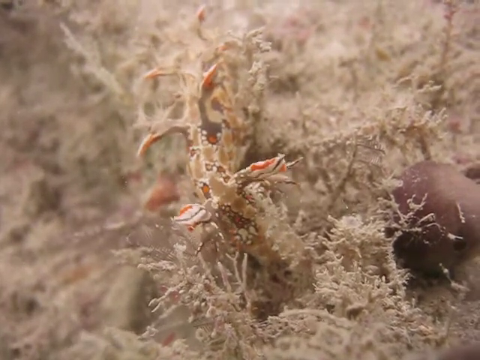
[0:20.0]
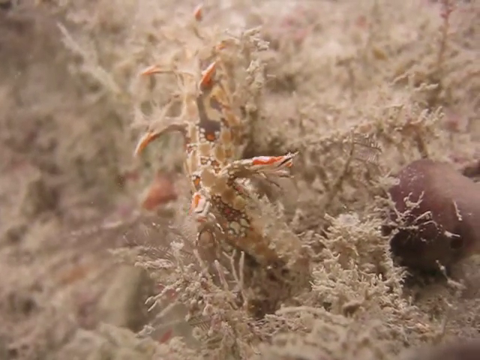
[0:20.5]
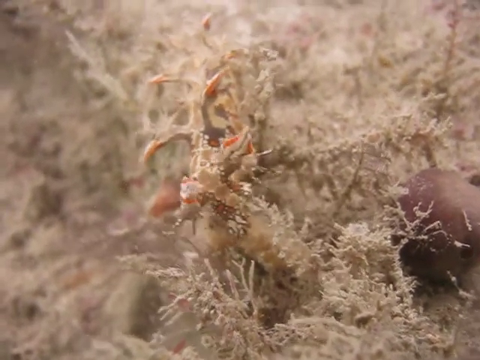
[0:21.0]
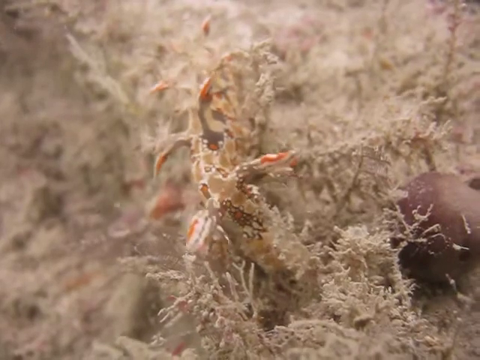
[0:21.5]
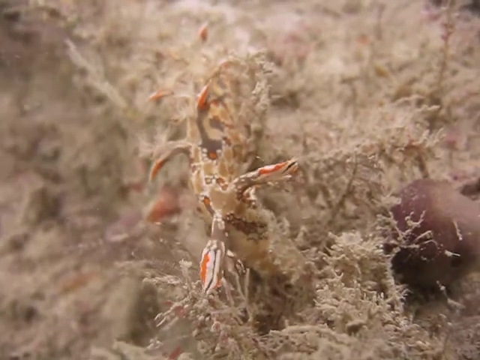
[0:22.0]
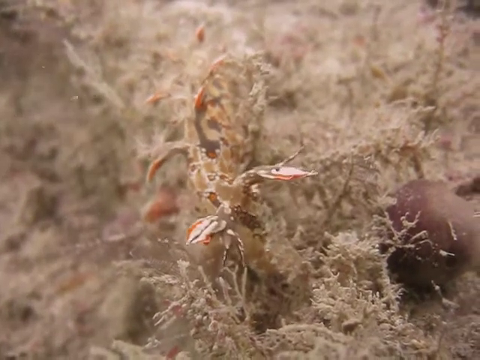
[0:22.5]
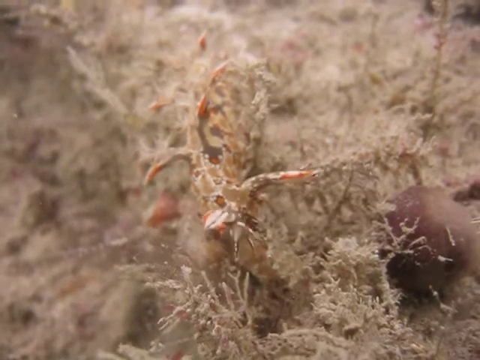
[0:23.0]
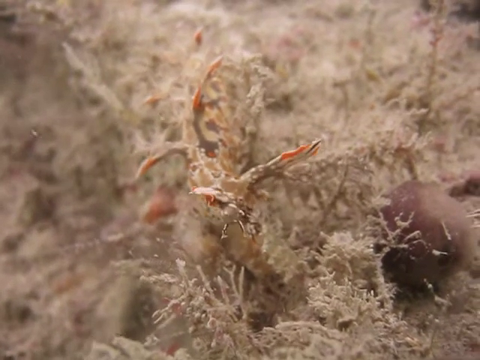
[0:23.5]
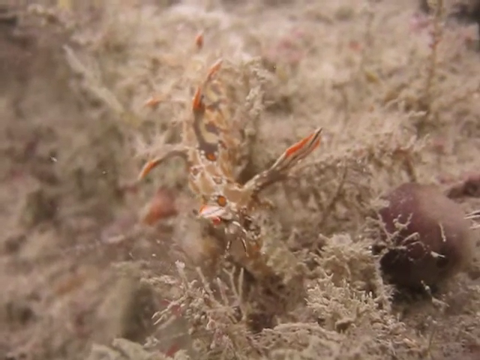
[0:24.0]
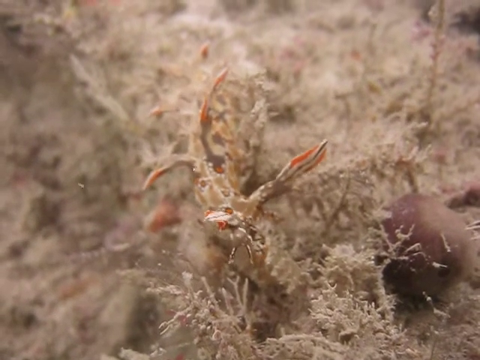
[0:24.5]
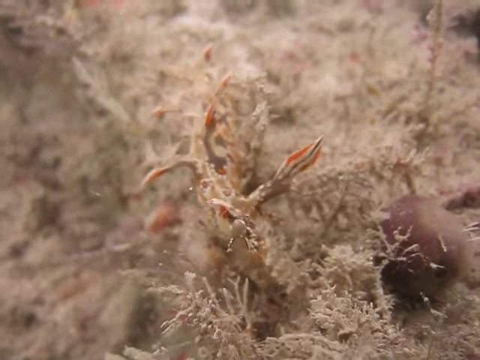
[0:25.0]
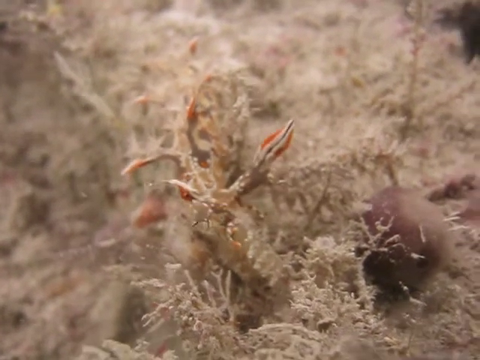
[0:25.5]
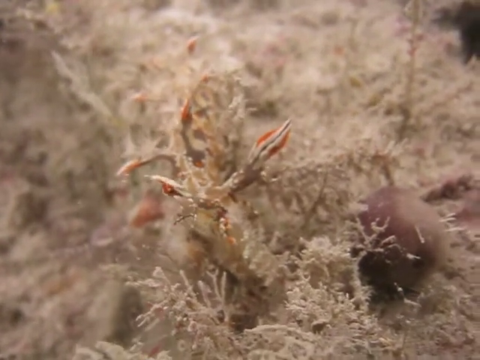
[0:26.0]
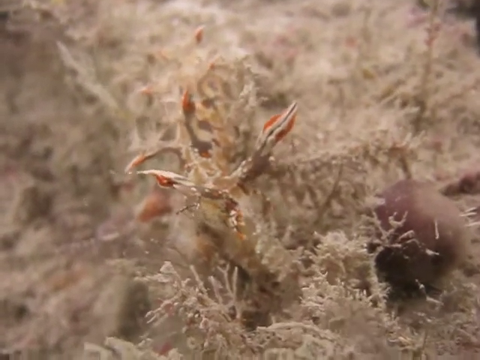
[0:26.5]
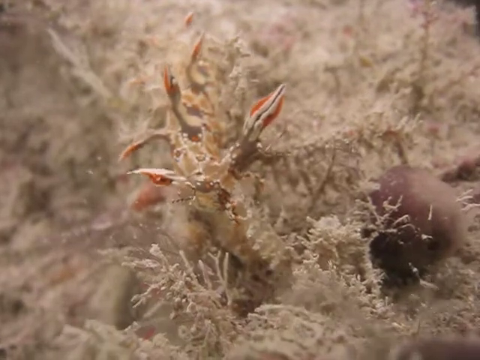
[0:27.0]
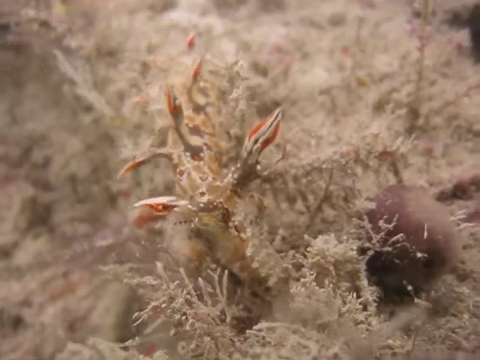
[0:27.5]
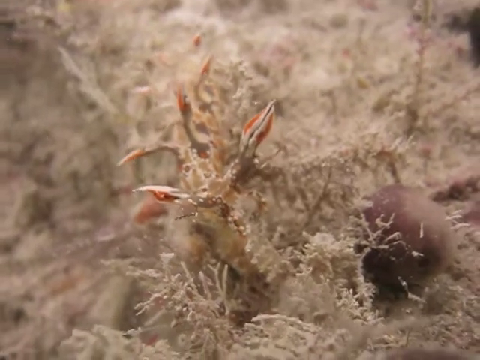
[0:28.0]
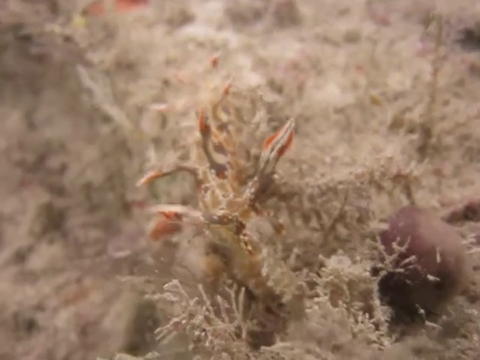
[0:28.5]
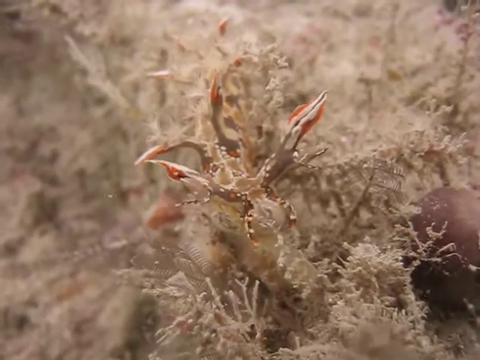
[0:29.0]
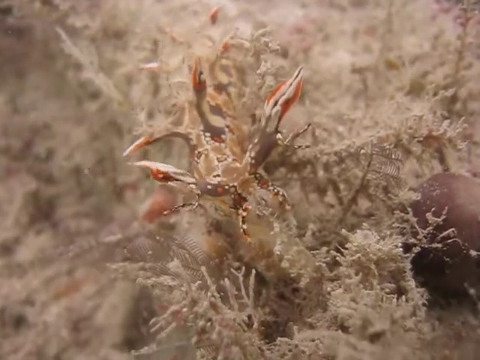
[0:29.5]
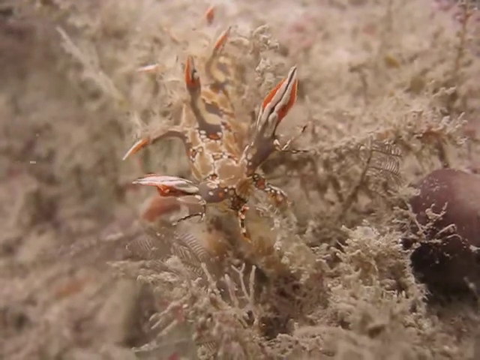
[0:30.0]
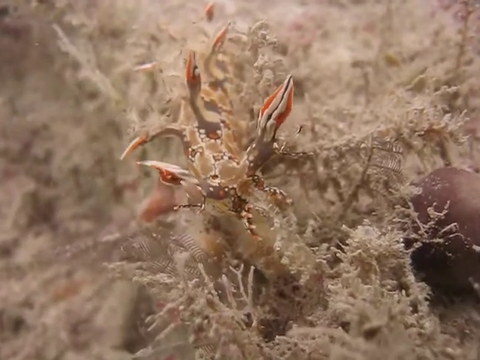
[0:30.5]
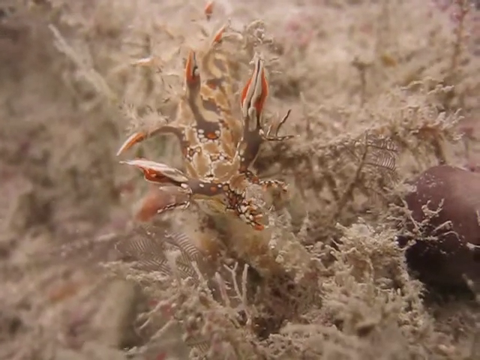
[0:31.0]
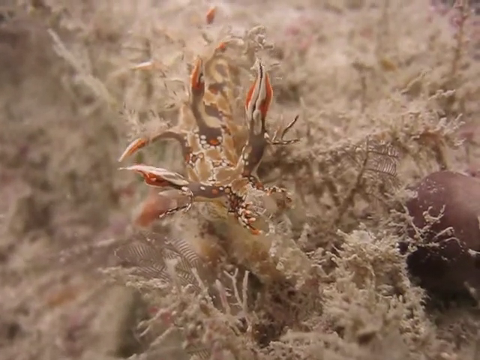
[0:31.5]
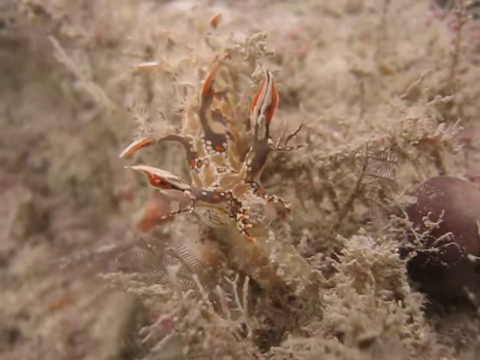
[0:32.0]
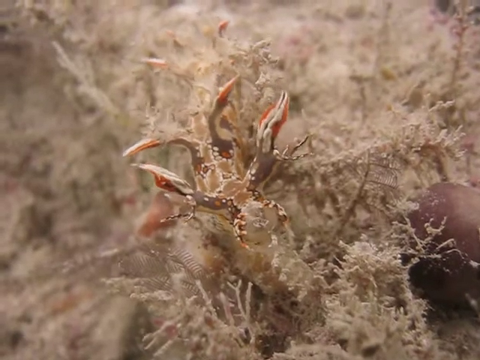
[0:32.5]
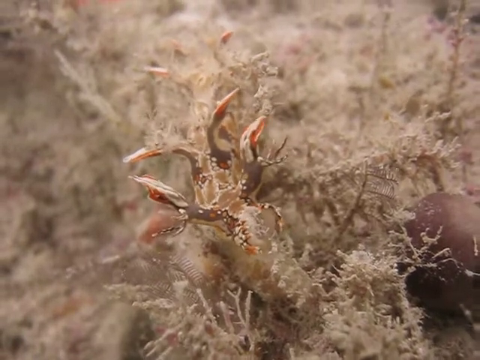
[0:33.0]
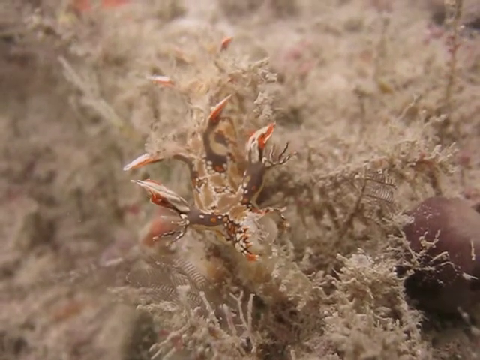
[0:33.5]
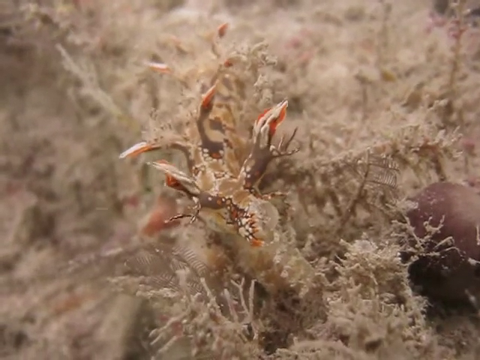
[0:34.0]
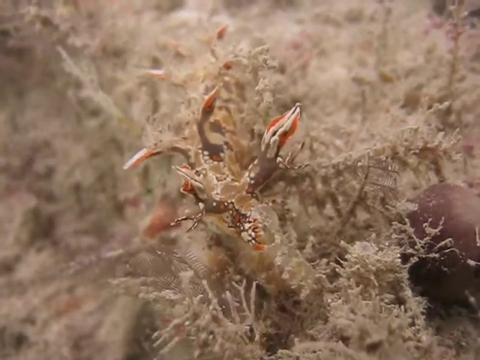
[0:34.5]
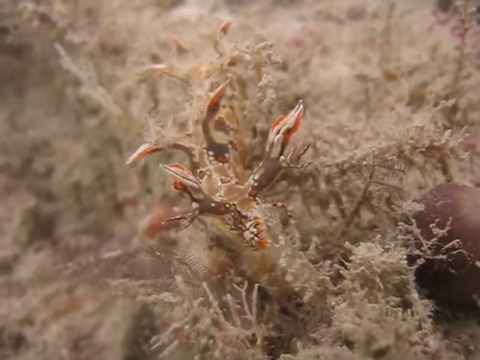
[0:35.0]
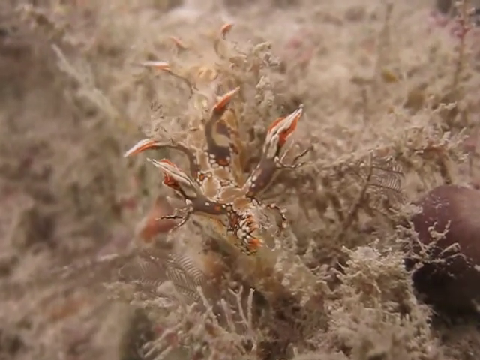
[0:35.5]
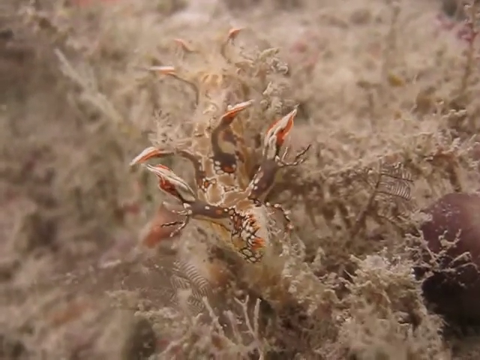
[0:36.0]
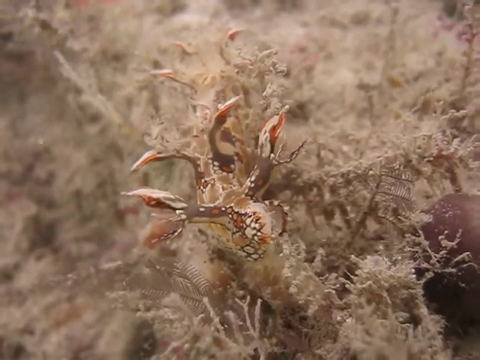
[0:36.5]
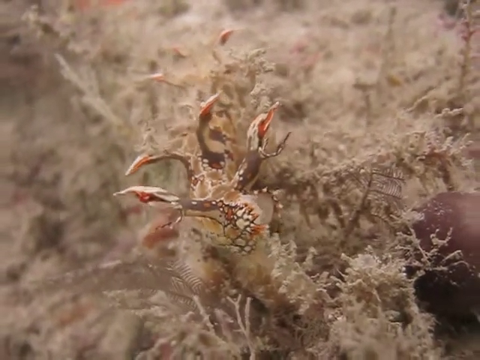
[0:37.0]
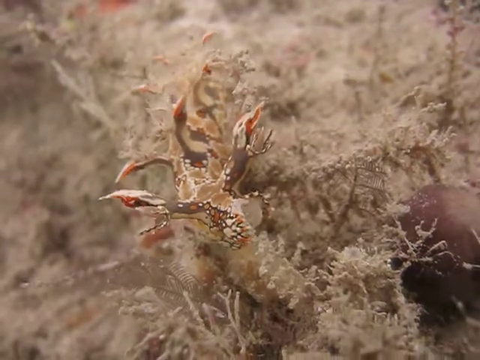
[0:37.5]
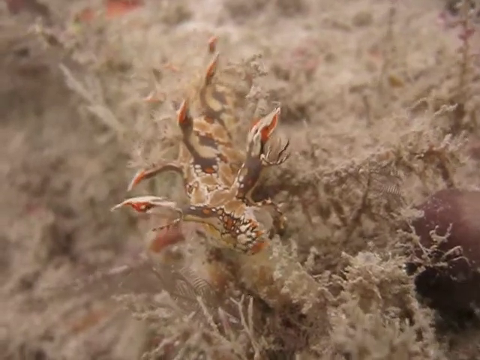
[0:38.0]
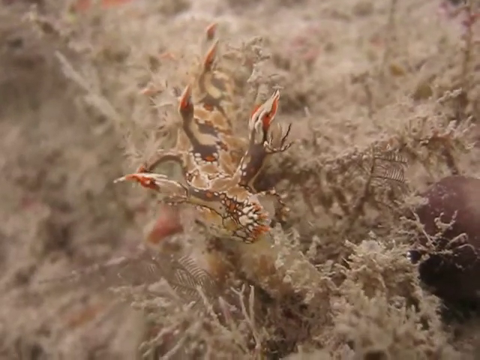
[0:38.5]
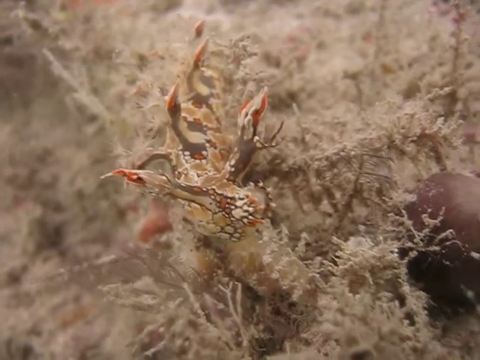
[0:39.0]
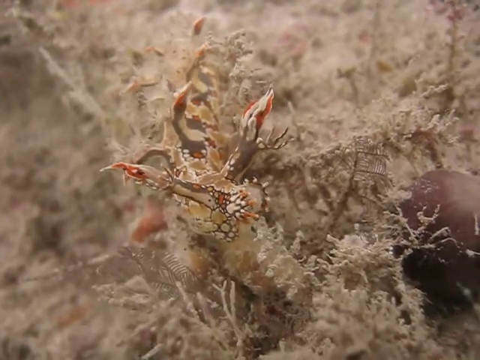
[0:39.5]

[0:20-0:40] A marine creature is on an area of spongy-type material on the bottom surface of the ocean. It is sort of beige with some orange and brown on it. The creature barely moves, shifting just a little bit on the spongy area; it isn't swimming but sort of sways with the ocean currents, which move it around a little at a time. A large rock is on the ocean bottom beside the coral-type spongy area the creature is on. No other fish or creatures are visible; the focus is solely on this one solitary creature.